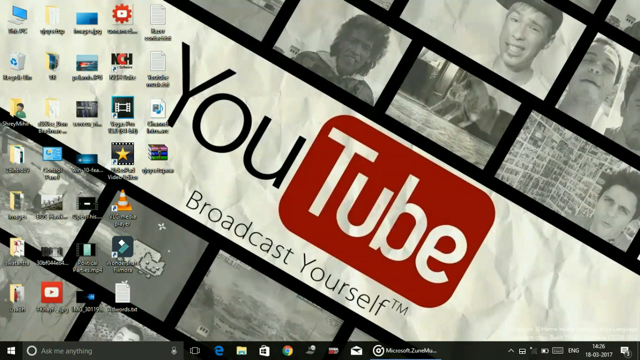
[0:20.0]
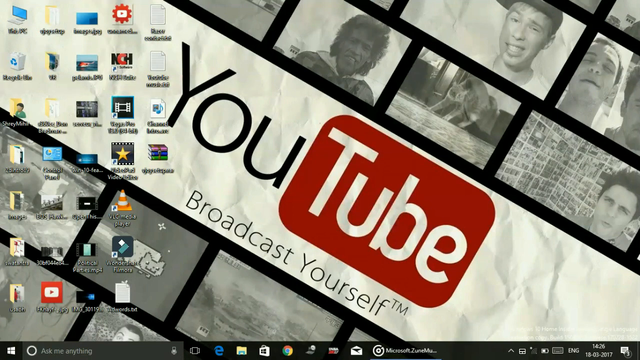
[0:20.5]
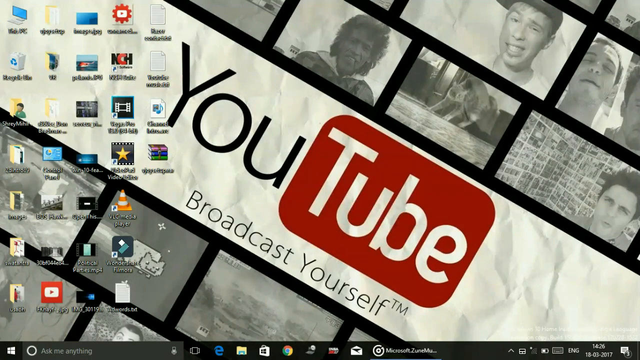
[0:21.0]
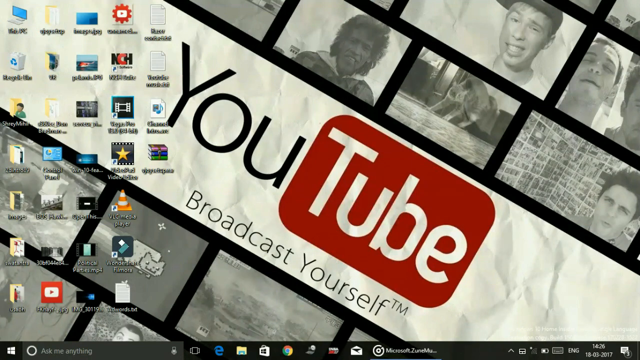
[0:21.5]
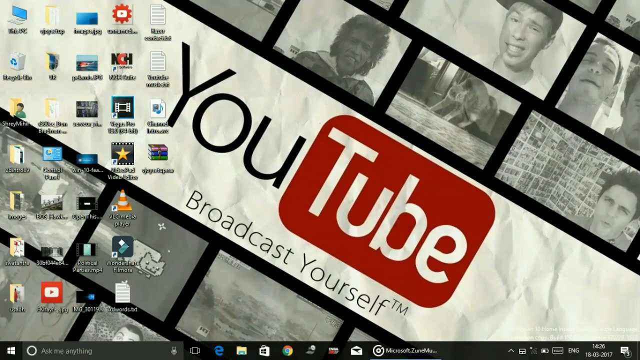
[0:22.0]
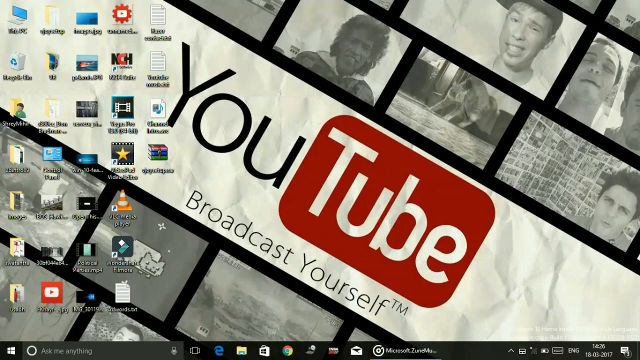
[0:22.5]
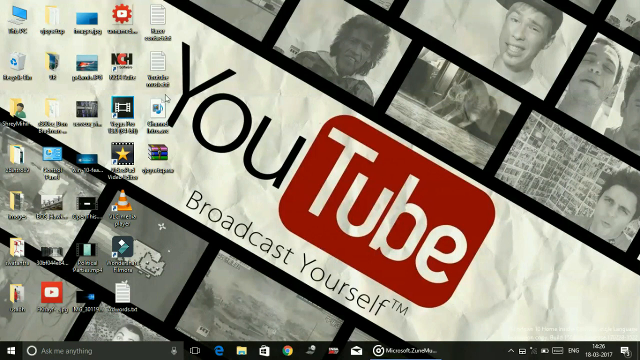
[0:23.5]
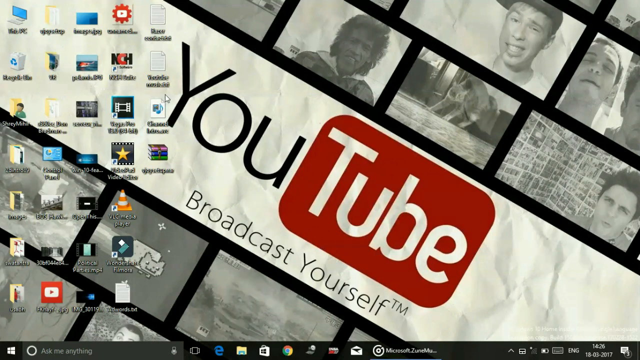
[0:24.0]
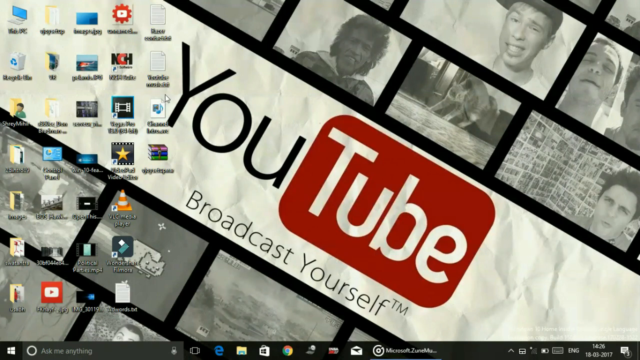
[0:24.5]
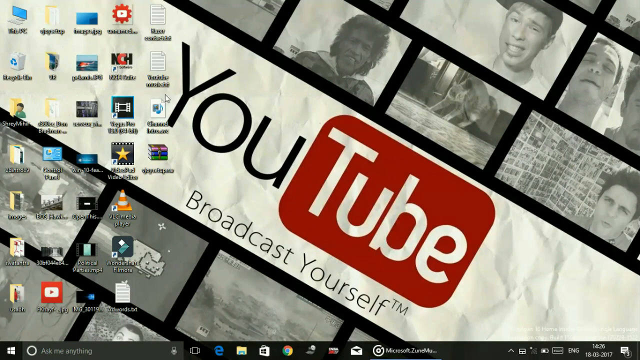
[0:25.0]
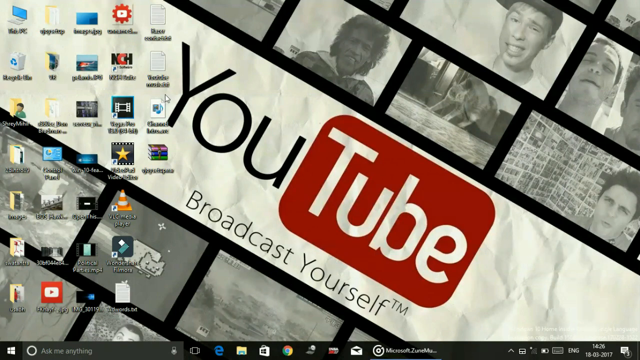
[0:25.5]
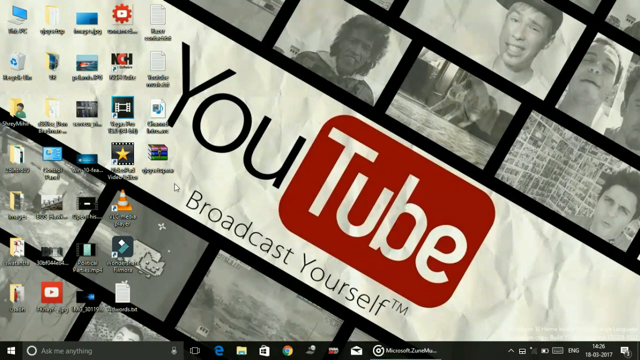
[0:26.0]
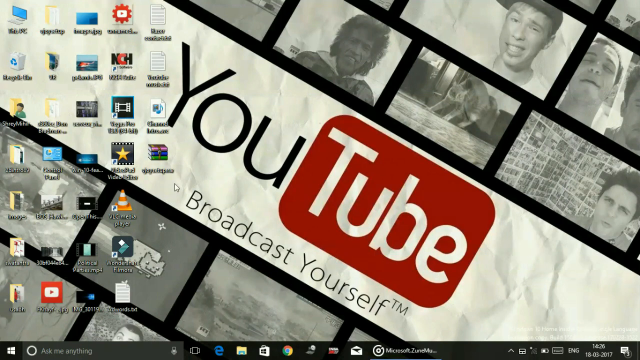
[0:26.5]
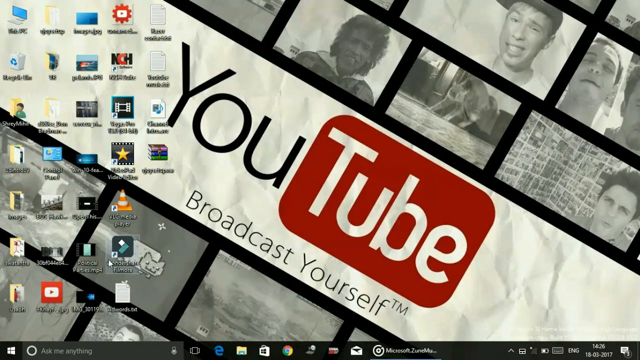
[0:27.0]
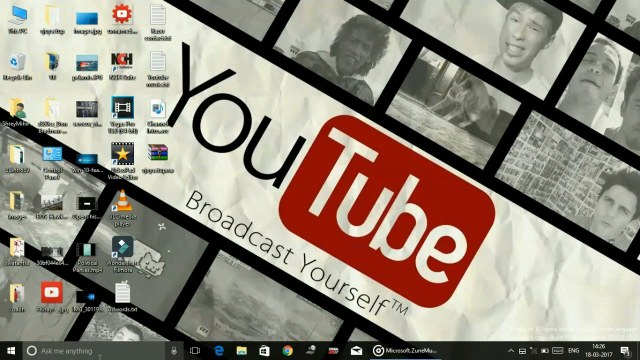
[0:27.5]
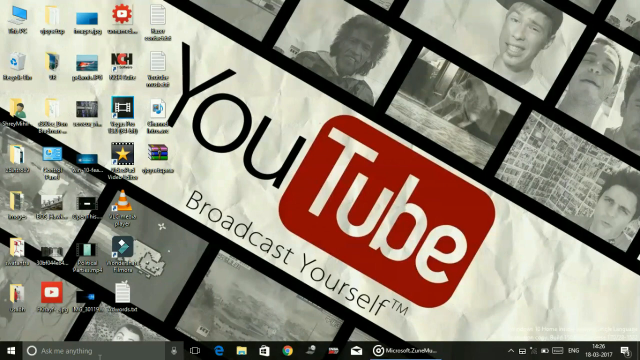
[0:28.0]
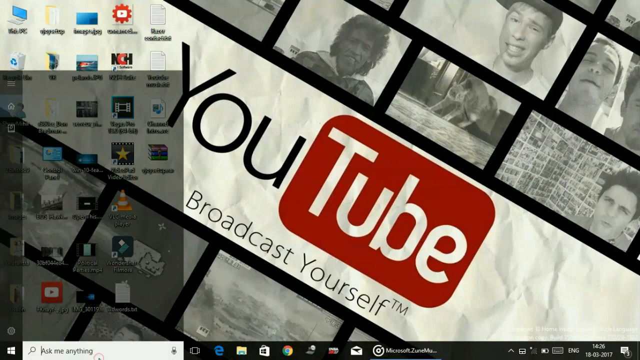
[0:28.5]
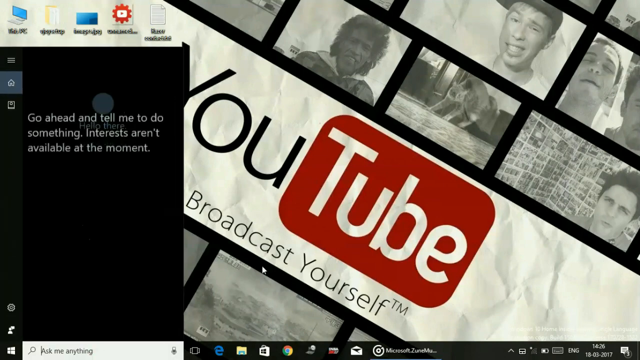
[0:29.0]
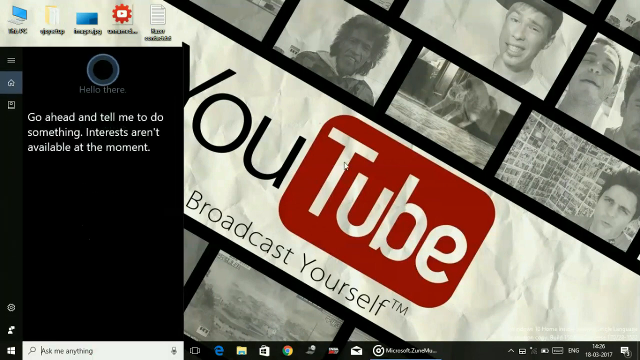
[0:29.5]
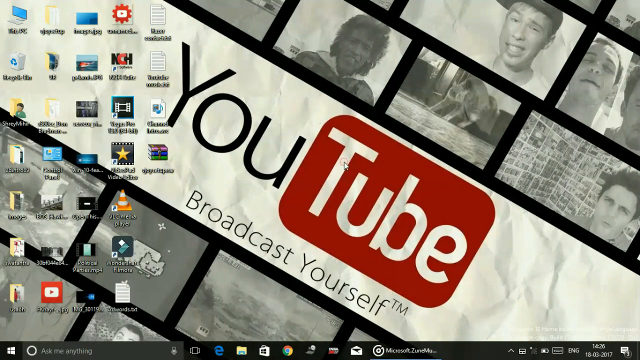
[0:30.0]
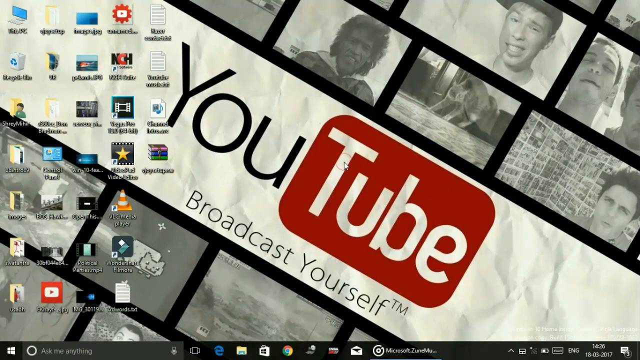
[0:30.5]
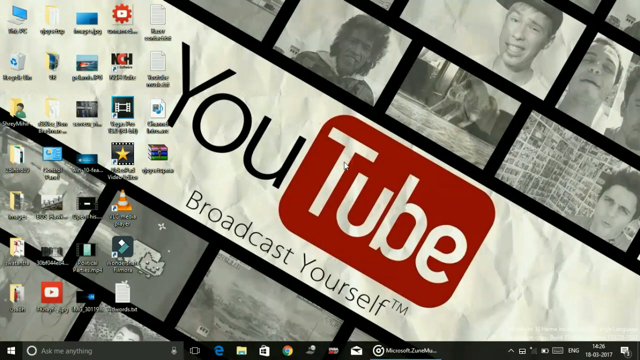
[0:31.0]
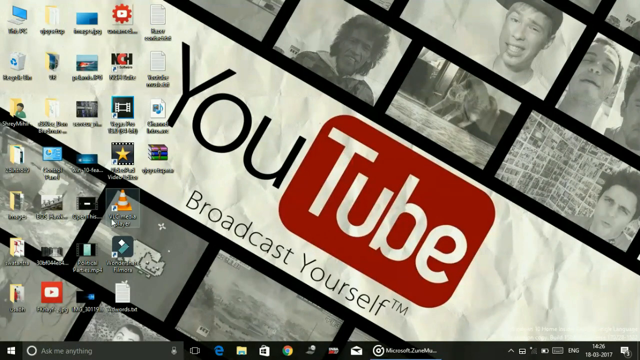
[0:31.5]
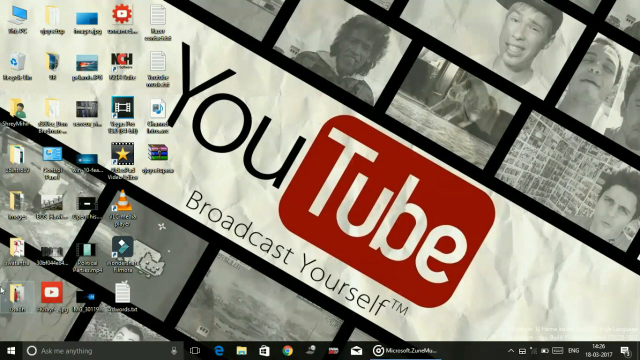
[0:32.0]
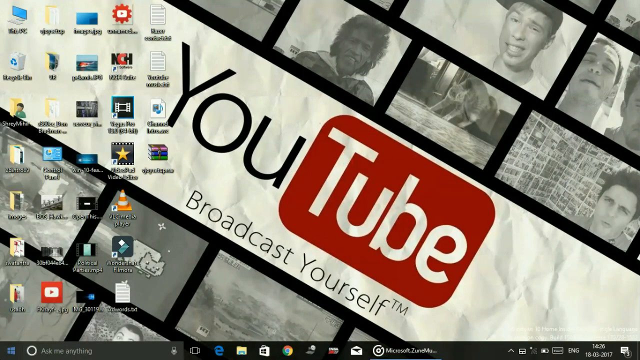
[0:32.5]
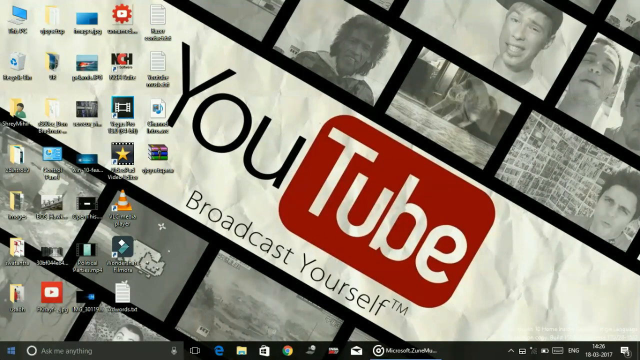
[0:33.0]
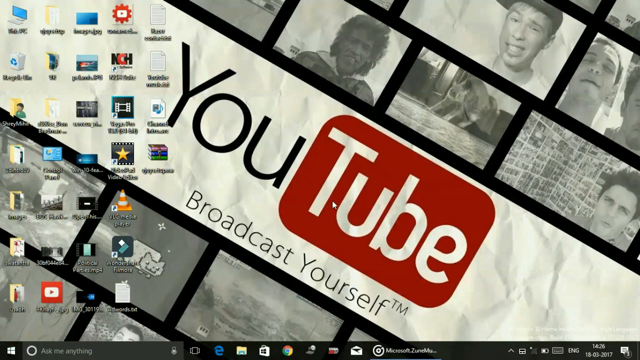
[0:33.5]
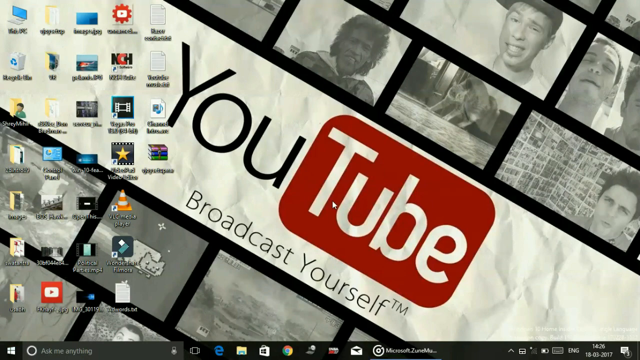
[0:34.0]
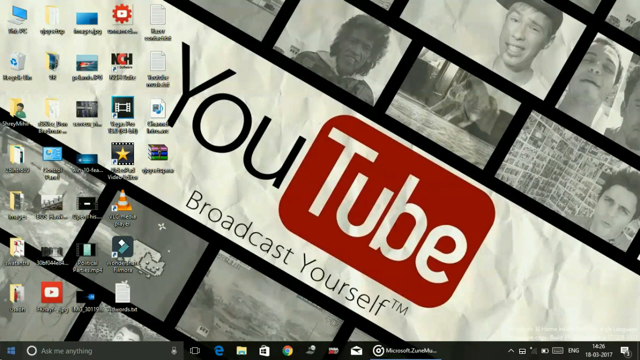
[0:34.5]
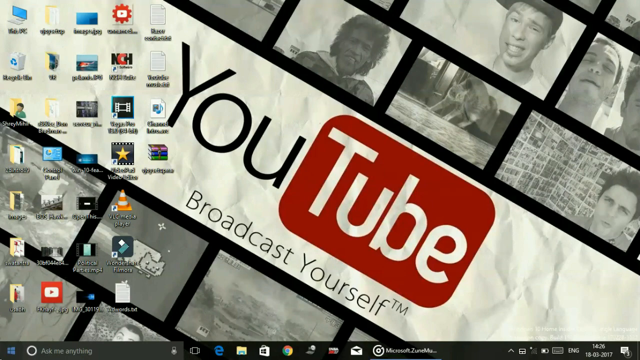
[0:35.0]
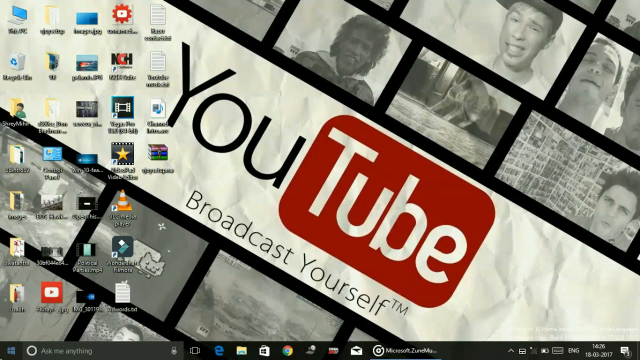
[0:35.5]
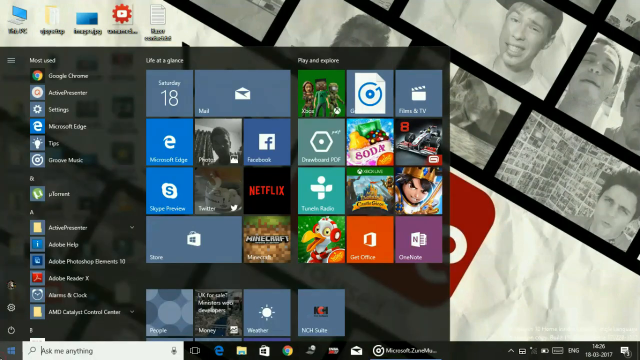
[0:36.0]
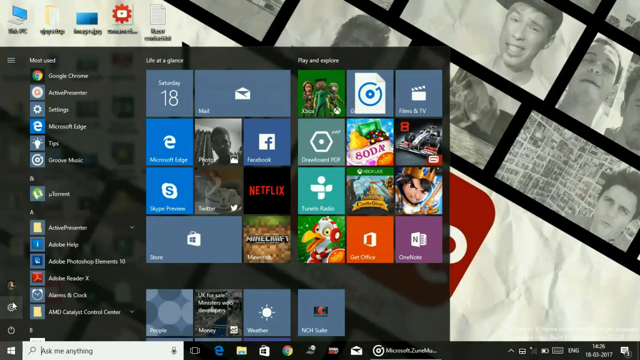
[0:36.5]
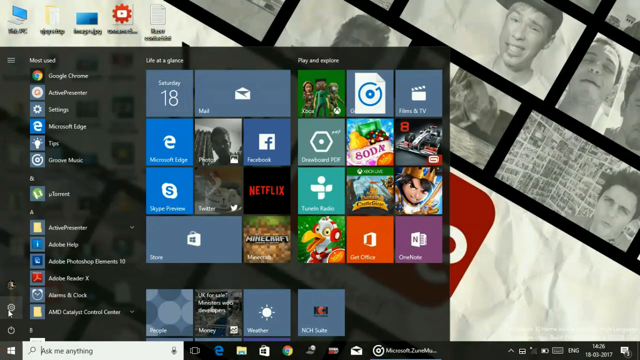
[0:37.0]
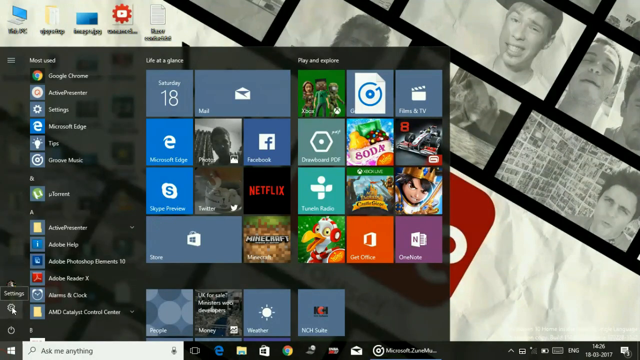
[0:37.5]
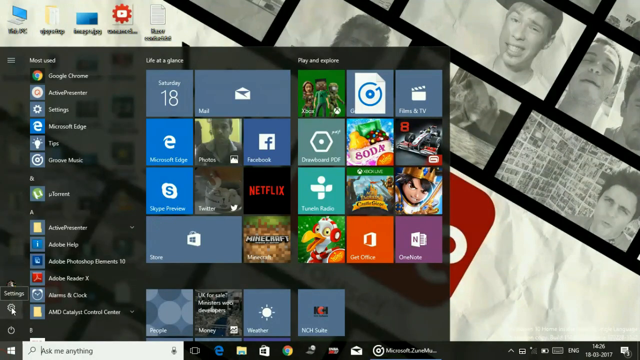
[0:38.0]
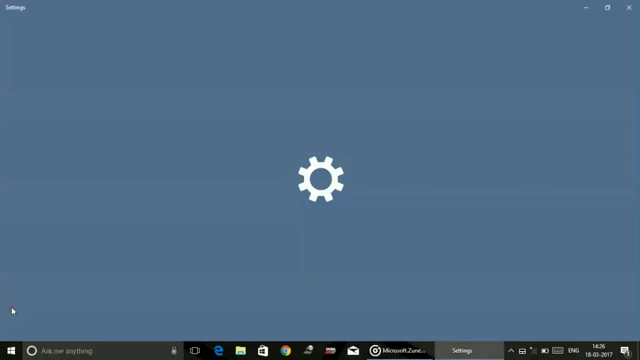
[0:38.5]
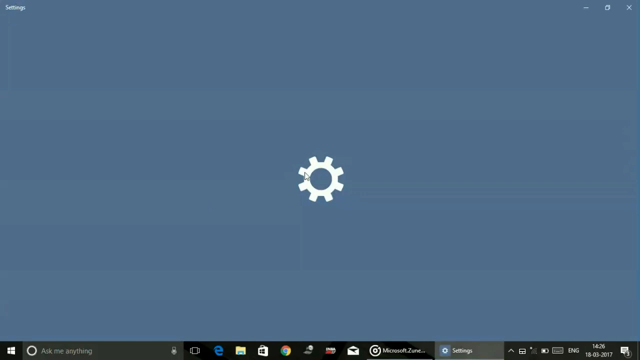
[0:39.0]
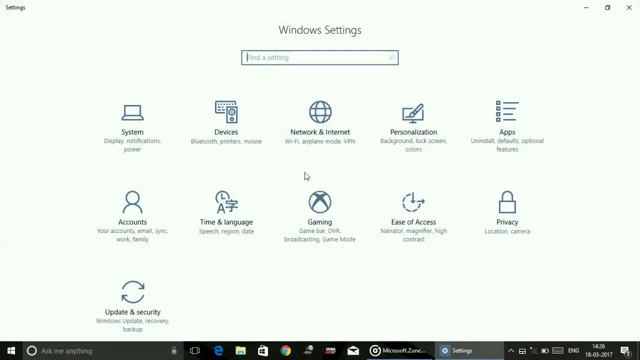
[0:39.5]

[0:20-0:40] The static shot of the Windows 10 desktop continues until the mouse cursor moves to the Cortana box. The cursor then moves erratically across the desktop before going to the Start button and then to Windows Settings, and the Windows Settings screen opens. Rows and columns of desktop icons are on the left of the desktop, and the wallpaper says "YouTube Broadcast Yourself." The whole shot is a screen capture from a PC, with no people, animals or other living things visible.